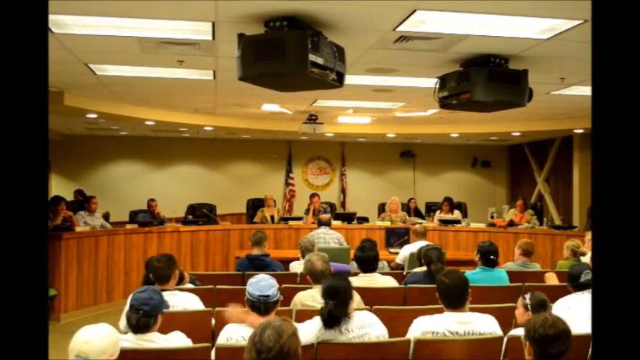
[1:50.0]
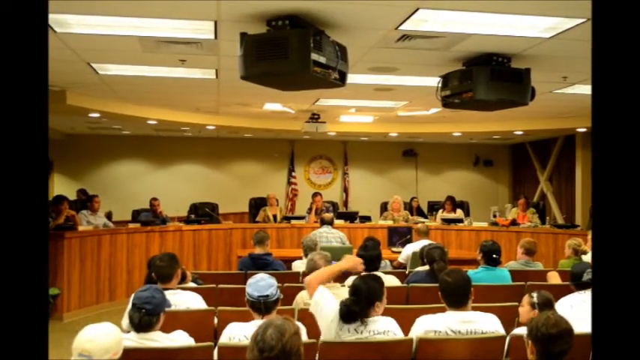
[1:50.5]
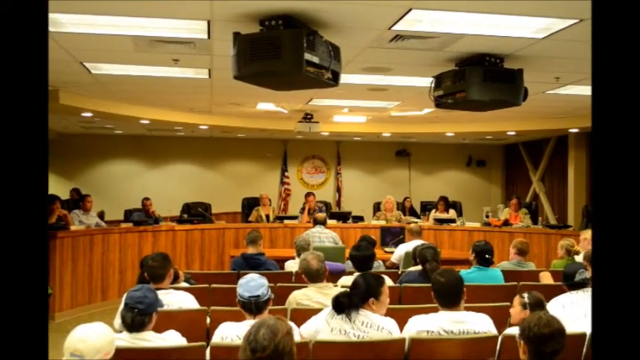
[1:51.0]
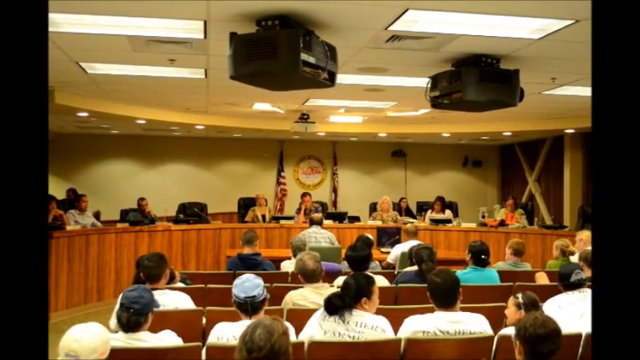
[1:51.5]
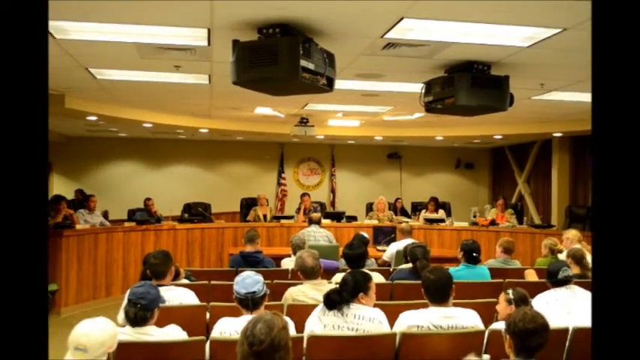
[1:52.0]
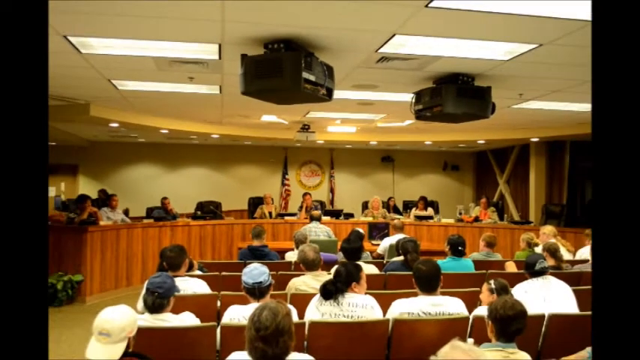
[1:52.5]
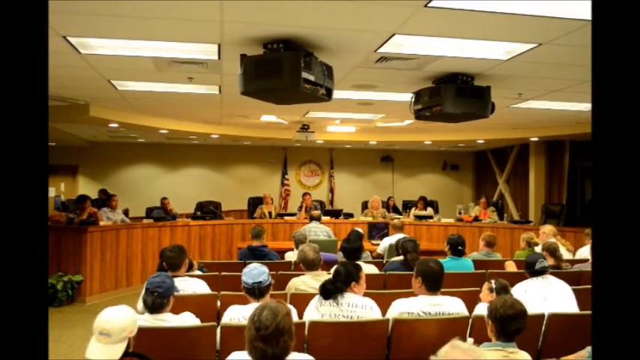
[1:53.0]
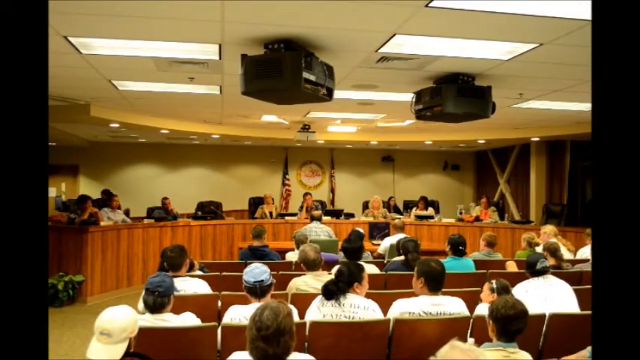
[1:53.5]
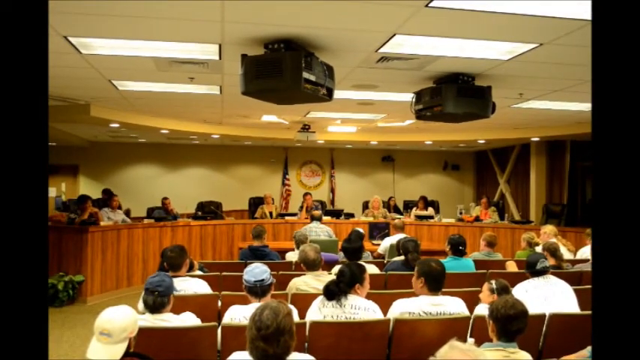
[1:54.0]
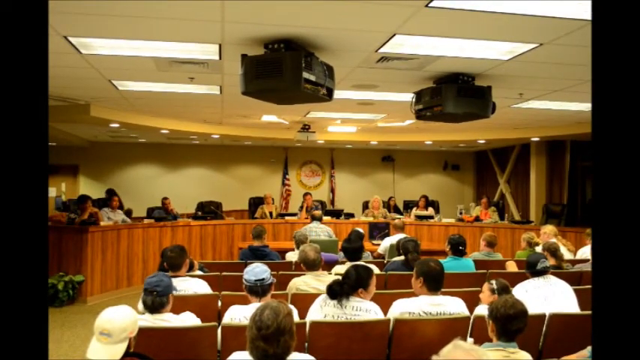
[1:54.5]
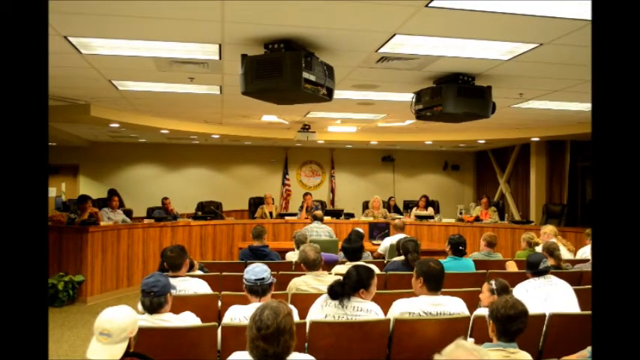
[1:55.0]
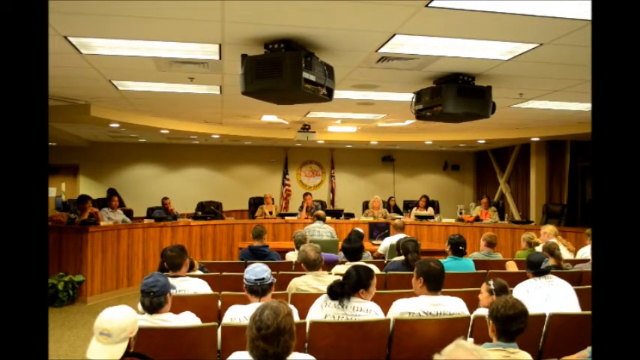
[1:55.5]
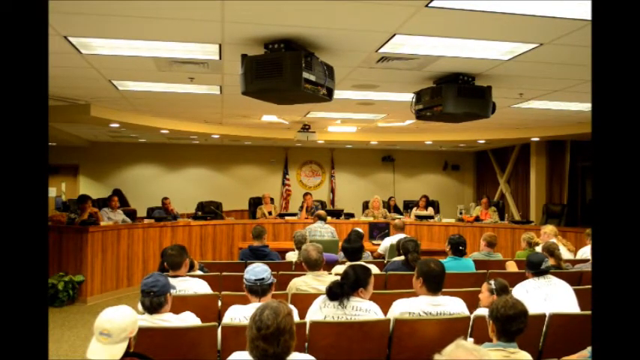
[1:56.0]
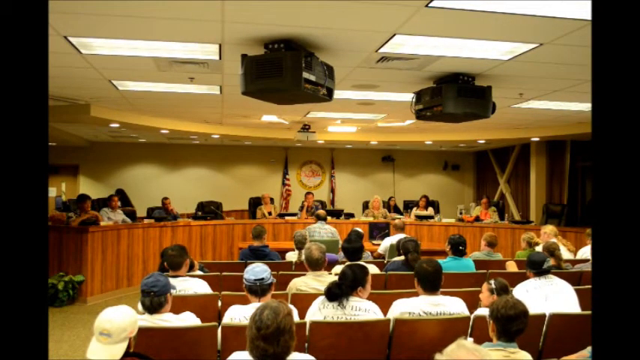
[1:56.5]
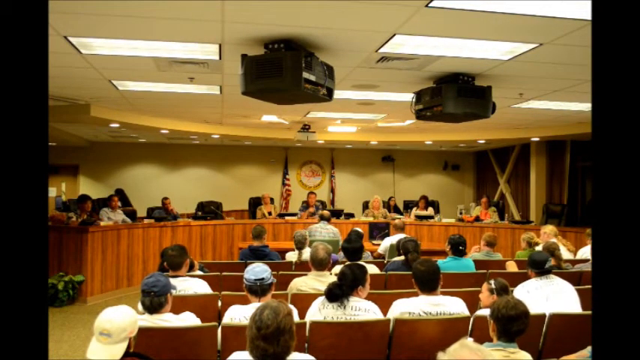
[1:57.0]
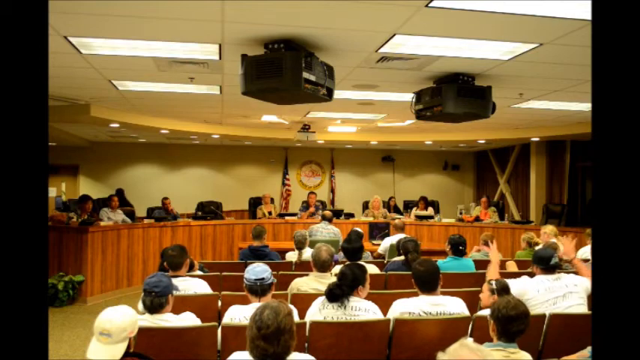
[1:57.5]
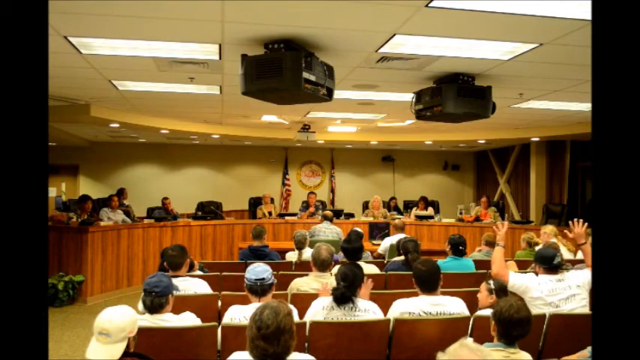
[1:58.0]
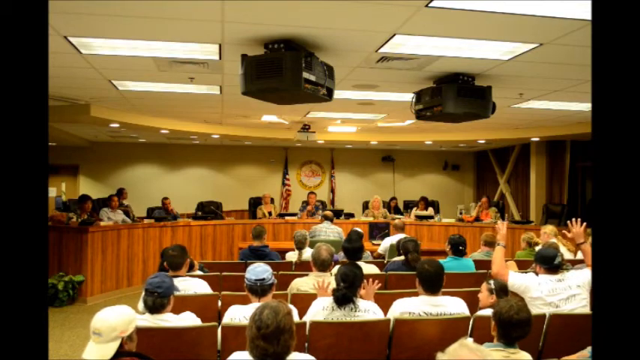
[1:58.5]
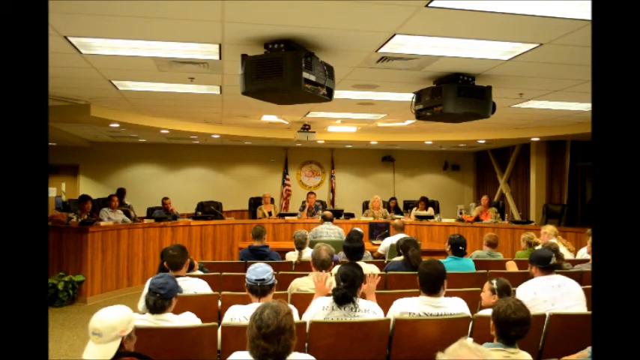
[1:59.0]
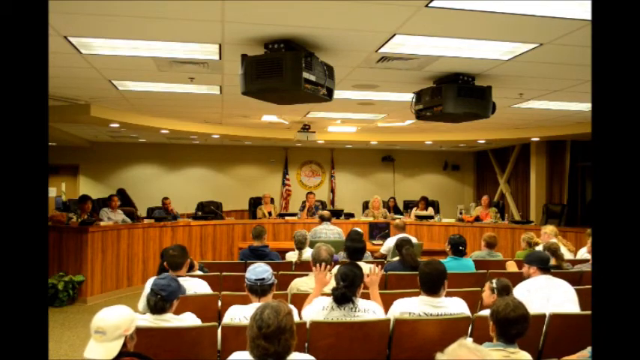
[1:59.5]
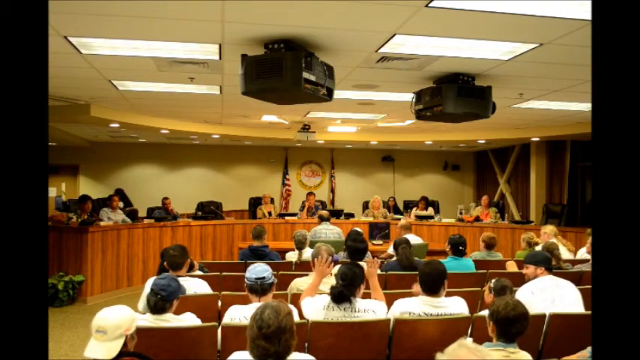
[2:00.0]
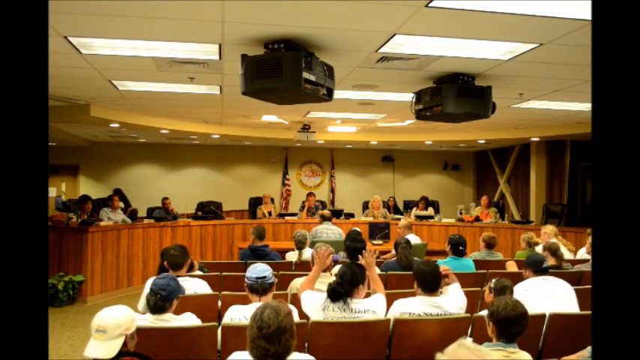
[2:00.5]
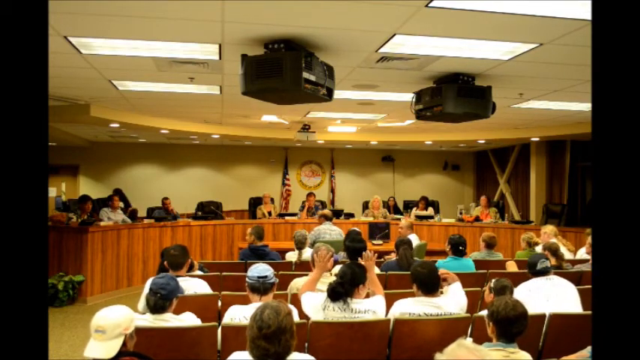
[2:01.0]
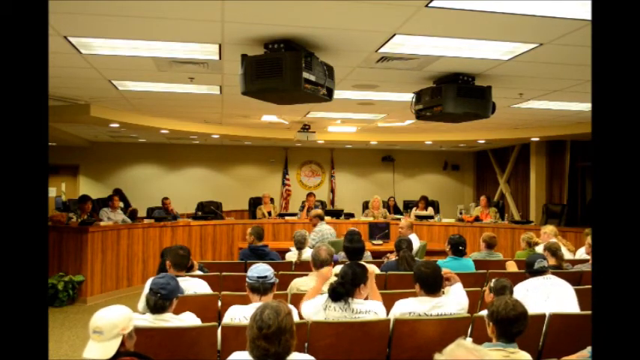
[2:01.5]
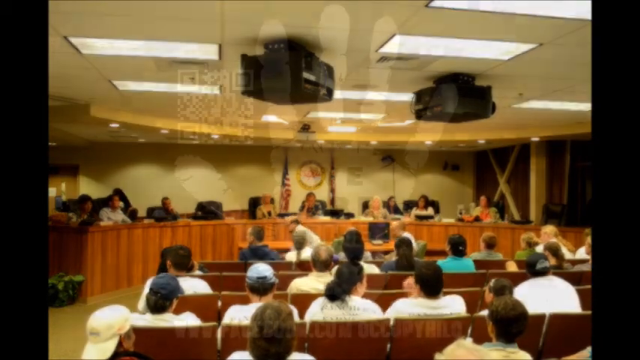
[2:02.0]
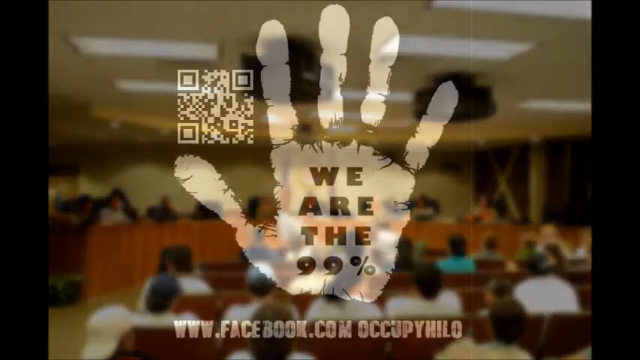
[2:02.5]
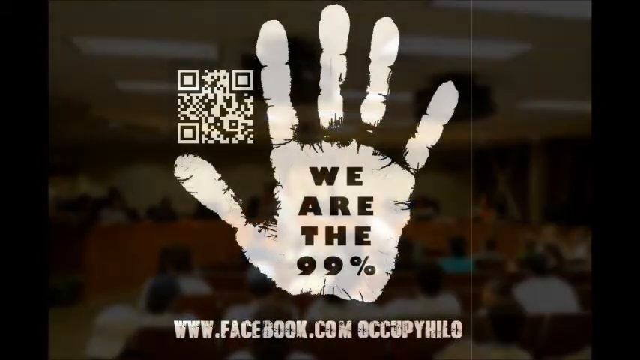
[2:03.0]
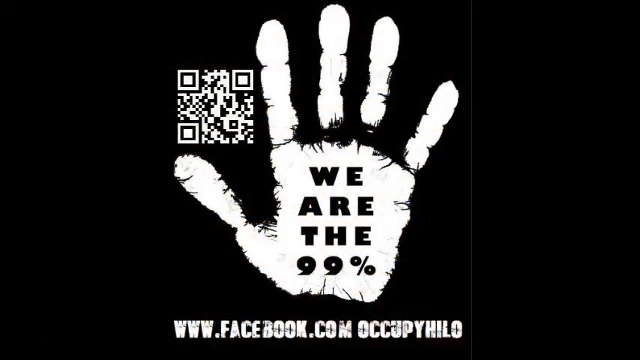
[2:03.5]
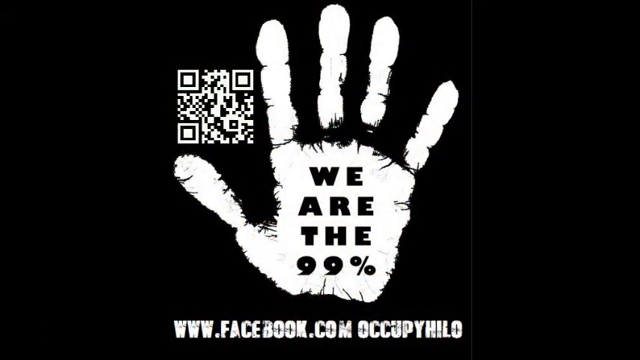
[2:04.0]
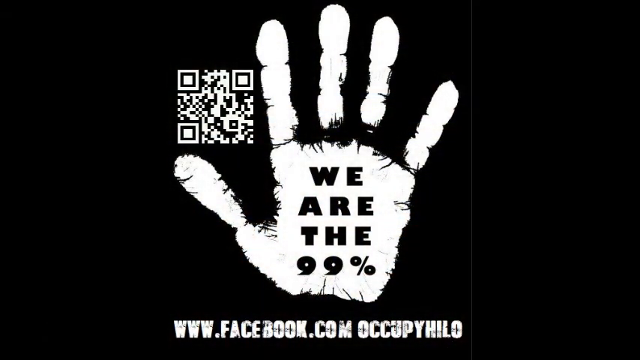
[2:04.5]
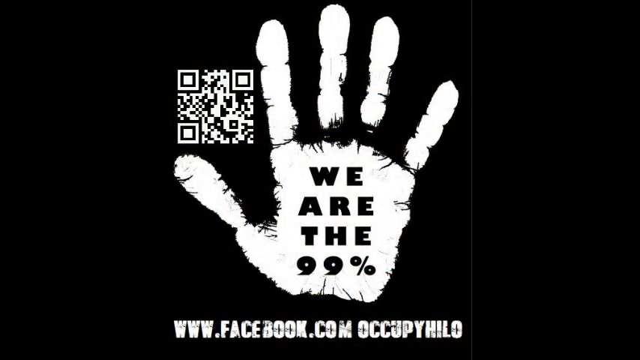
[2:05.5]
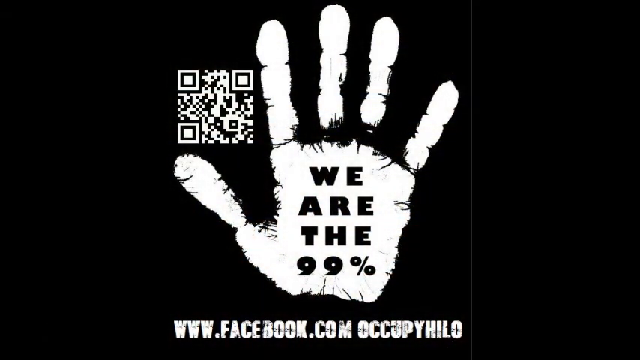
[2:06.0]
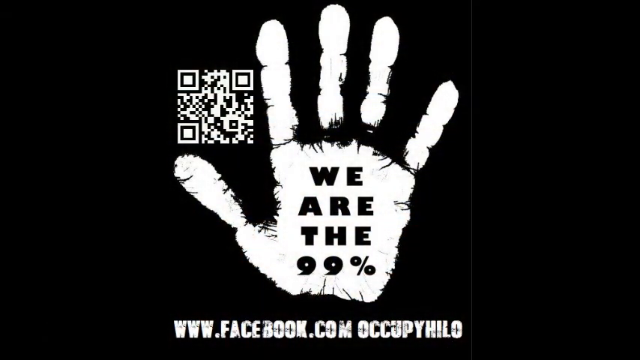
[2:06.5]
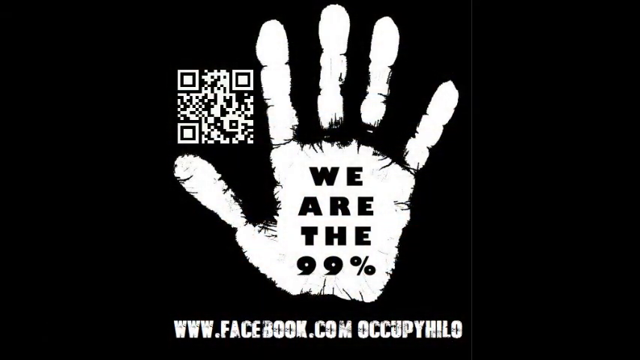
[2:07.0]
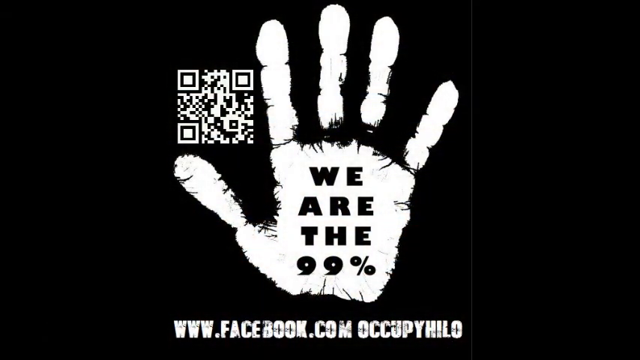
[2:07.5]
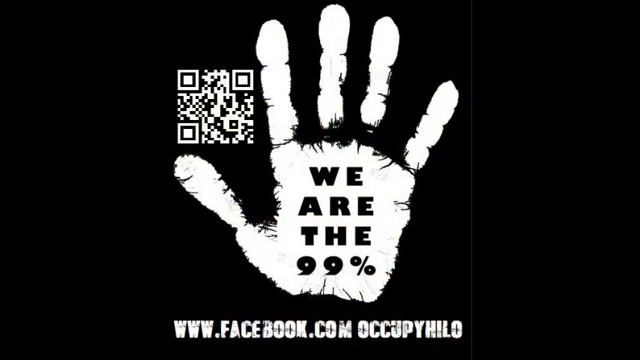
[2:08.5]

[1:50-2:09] The camera appears to be further back and starts to zoom out, revealing more people, including the other side of the room that was not shown before. Next, a QR code and a handprint appear; inside the handprint is written "we are the 99%". At the bottom, a link "www.facebook.com" appears.